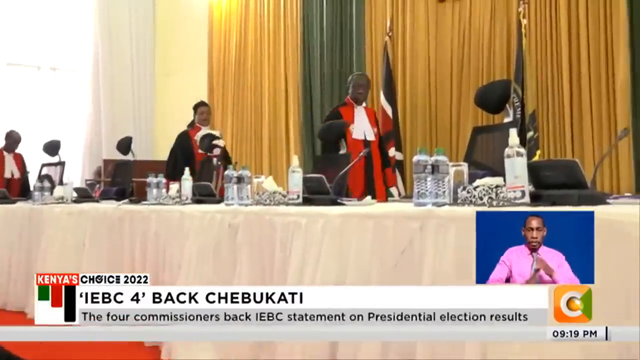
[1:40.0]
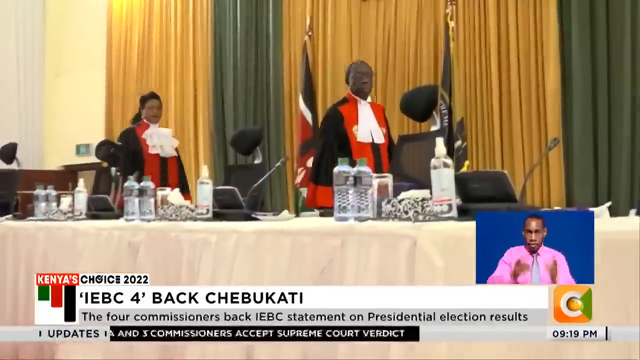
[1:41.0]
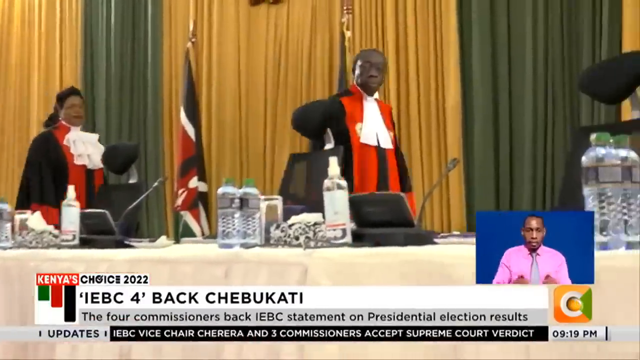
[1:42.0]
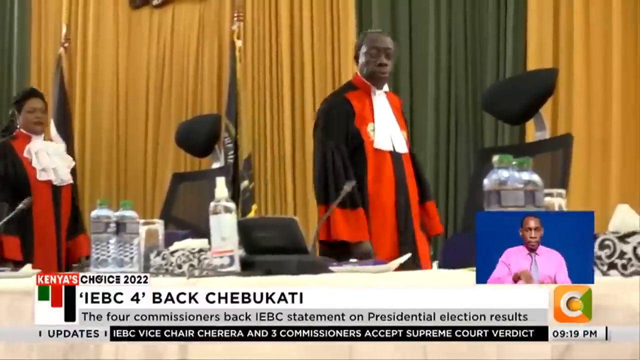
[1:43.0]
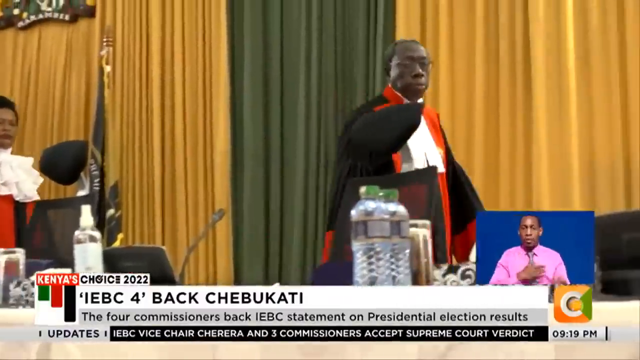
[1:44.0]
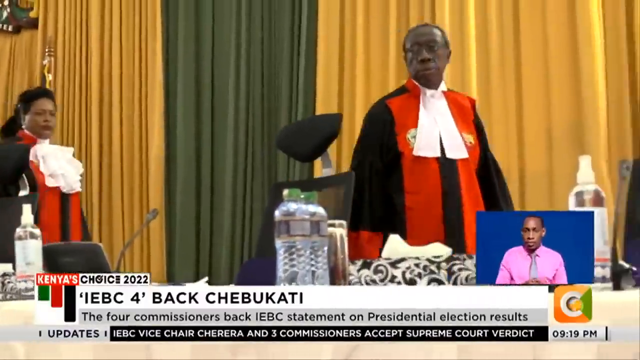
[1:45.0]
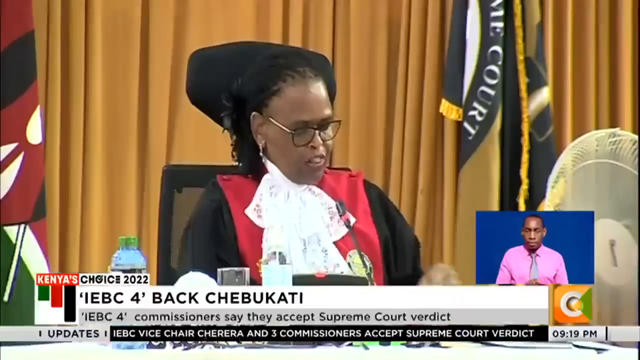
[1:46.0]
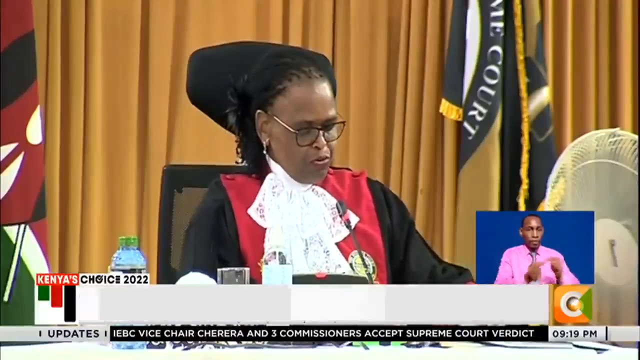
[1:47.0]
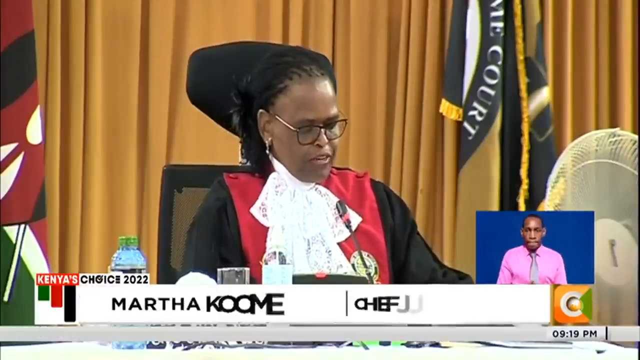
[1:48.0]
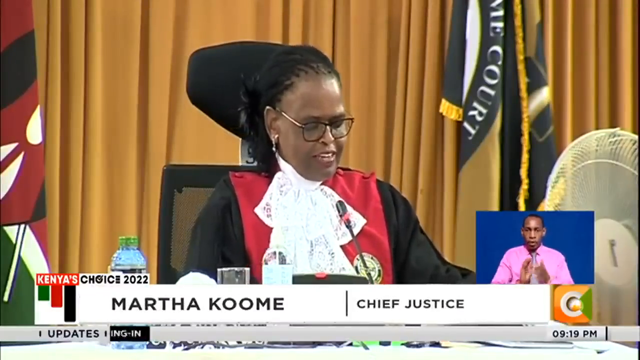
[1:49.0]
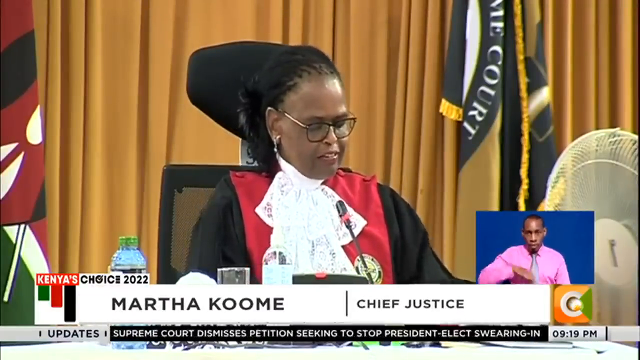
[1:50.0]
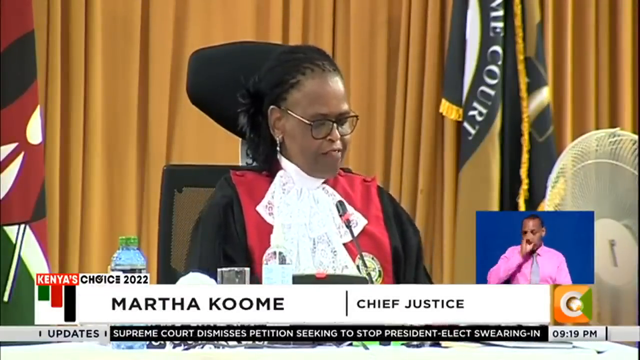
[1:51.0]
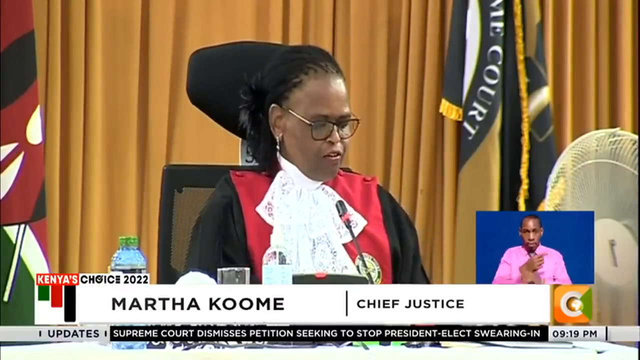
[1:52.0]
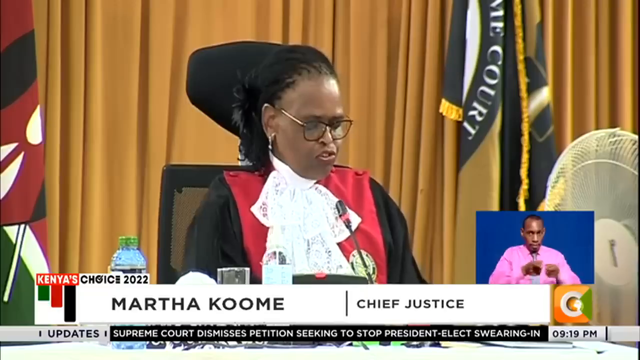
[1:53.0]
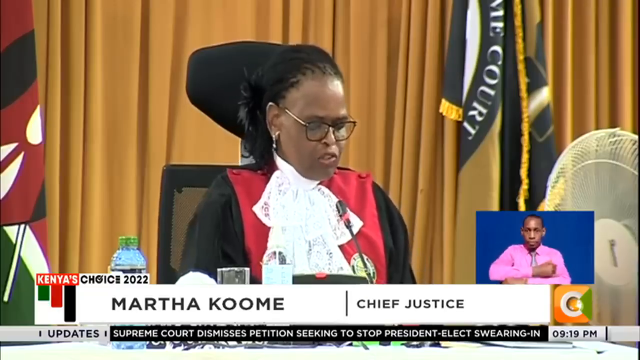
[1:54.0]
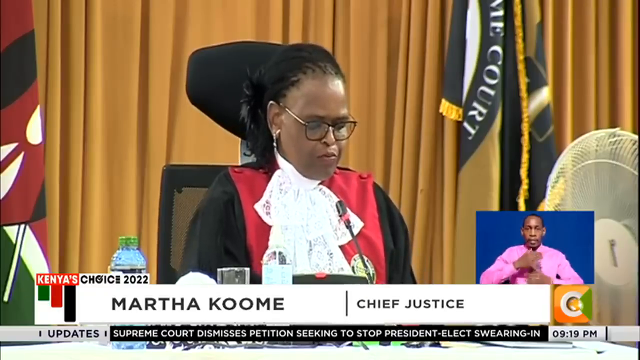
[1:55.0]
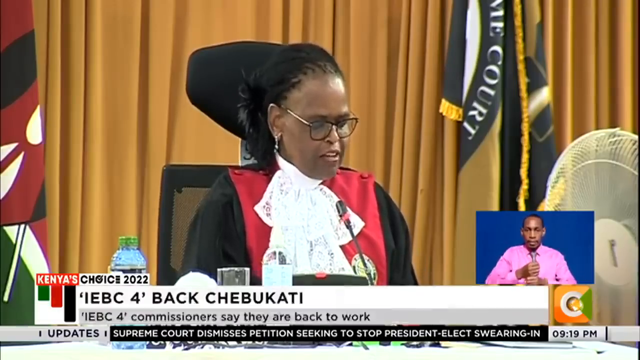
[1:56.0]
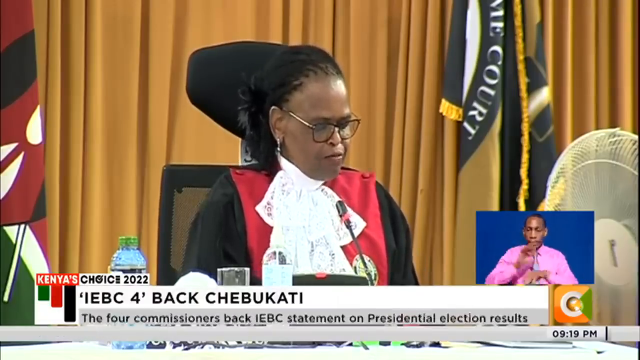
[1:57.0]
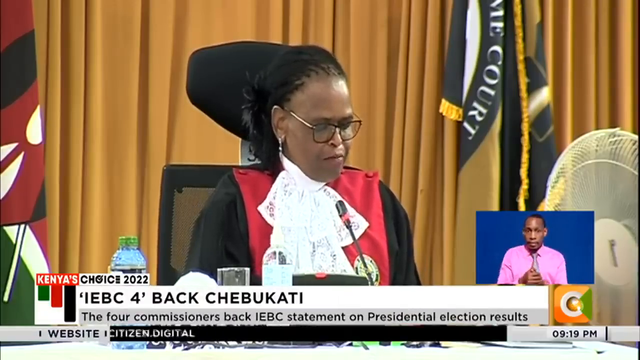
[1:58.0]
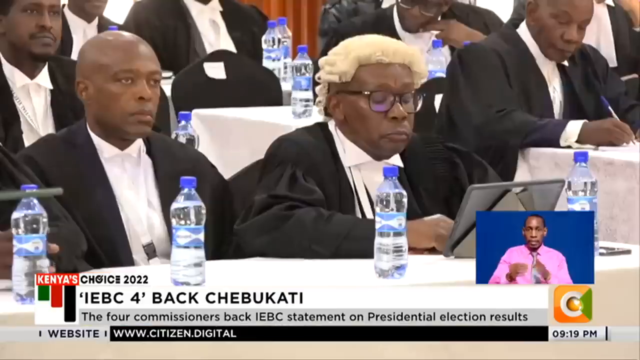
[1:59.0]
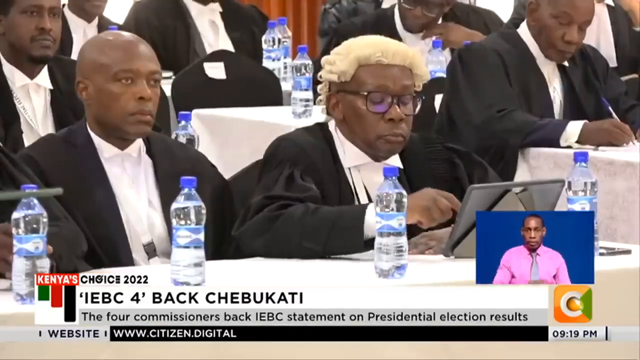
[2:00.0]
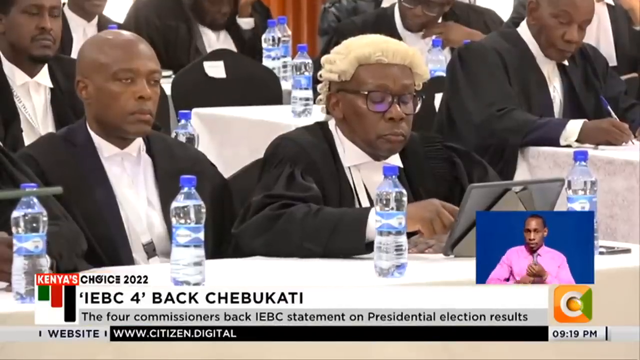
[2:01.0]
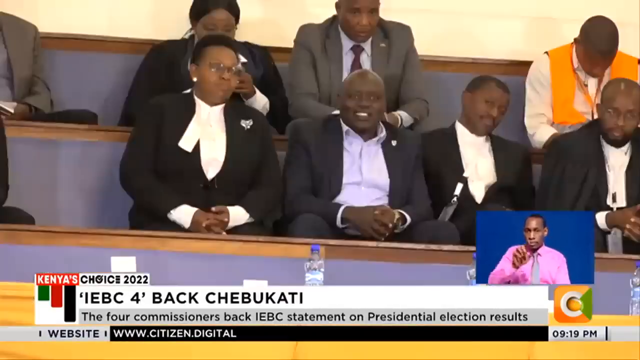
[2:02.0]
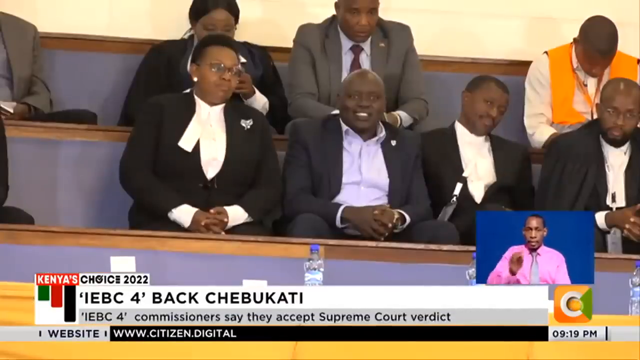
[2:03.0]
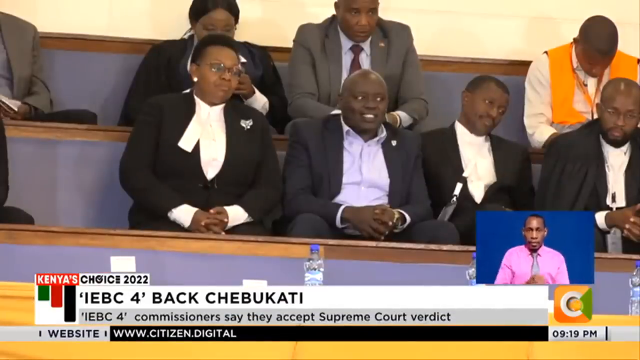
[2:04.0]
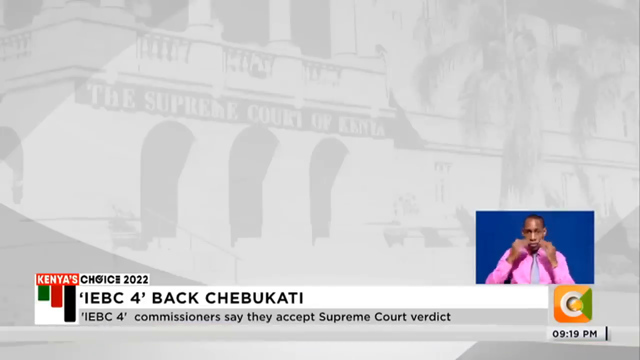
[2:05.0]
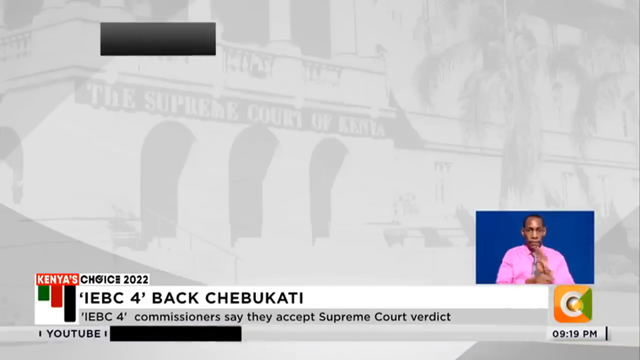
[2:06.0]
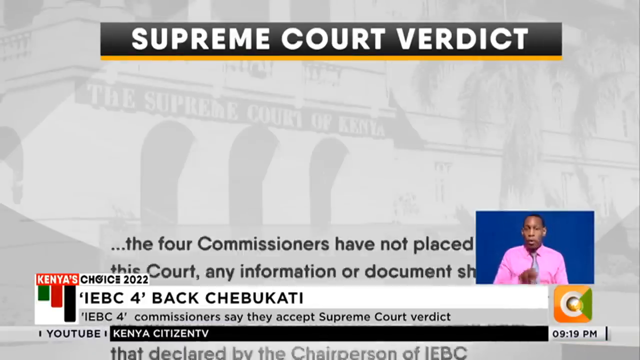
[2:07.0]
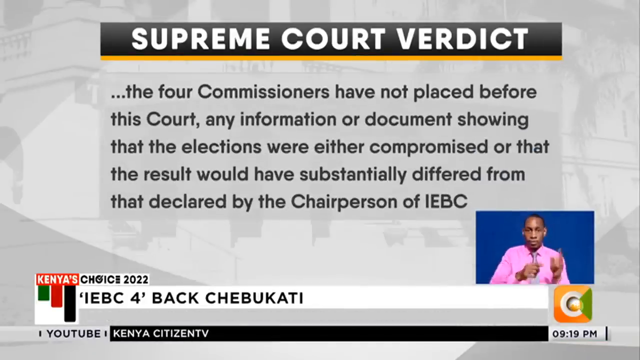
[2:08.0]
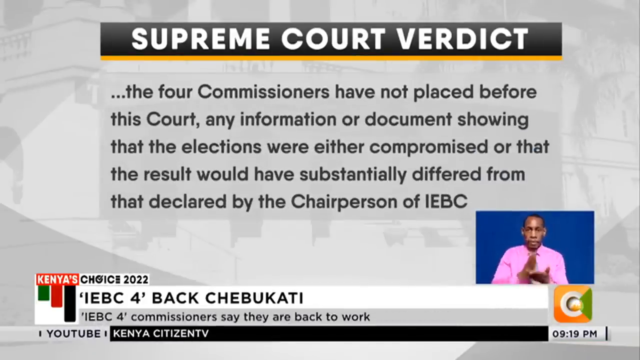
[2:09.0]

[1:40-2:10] Footage continues of the group dressed in black robes and sort of red vests, who are the Chief Justice and her bench rather than the IEBC. The Chief Justice, Martha Coombe, appears to be speaking about the ruling, seemingly reading a pre-made speech with her eyes down from the audience. Members of the audience listening to the speech are then shown, including a man on the right with strange-looking, bleached, pale blonde hair that is really curled up, almost like George Washington's. More footage of the audience follows, apparently in the upper part of the Supreme Court. Another quote from the Supreme Court then appears.